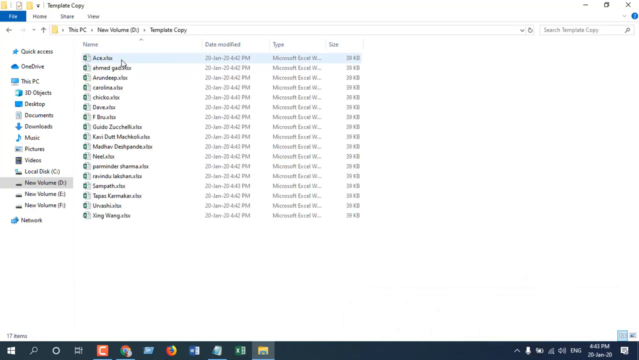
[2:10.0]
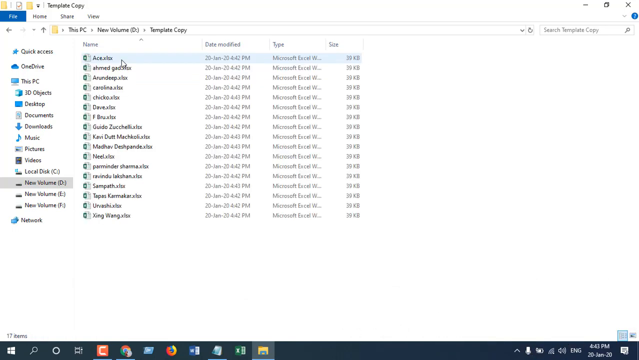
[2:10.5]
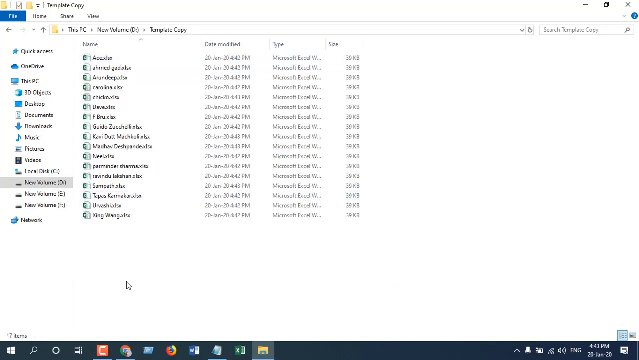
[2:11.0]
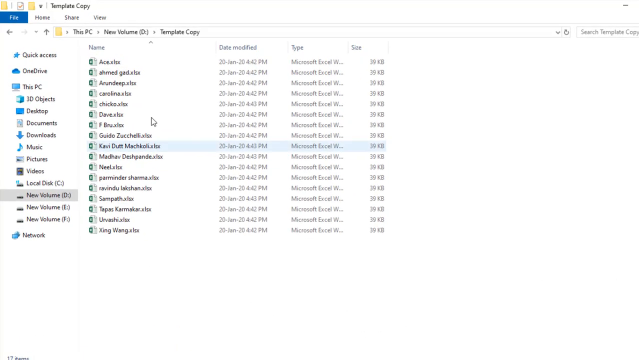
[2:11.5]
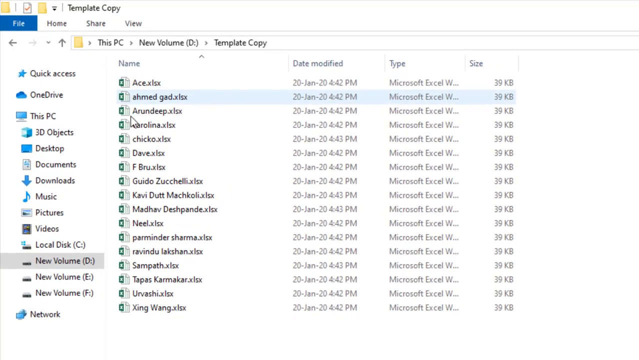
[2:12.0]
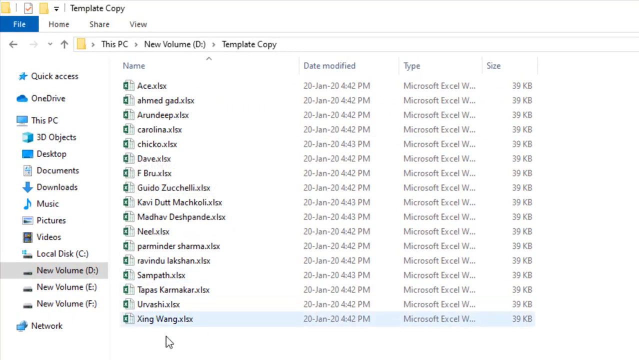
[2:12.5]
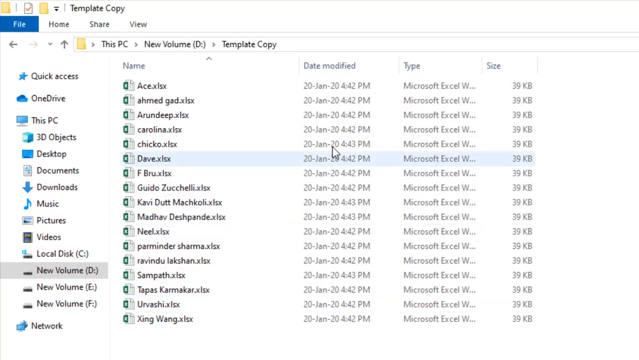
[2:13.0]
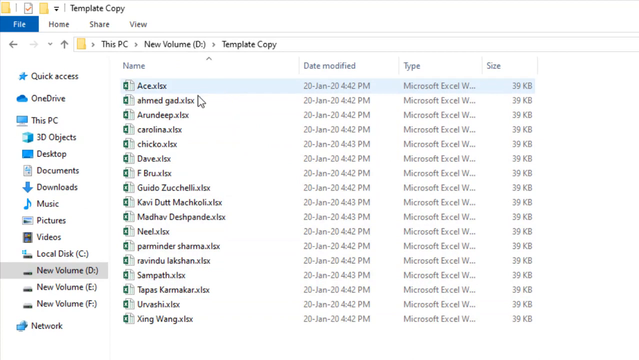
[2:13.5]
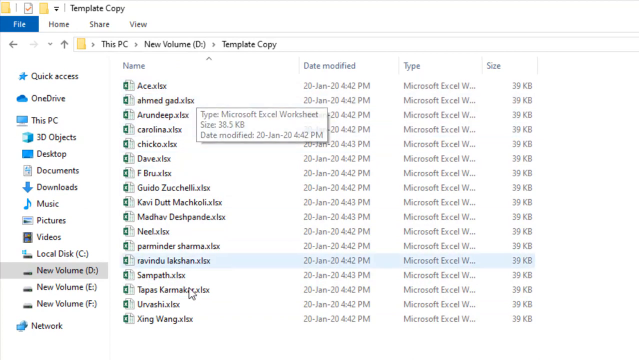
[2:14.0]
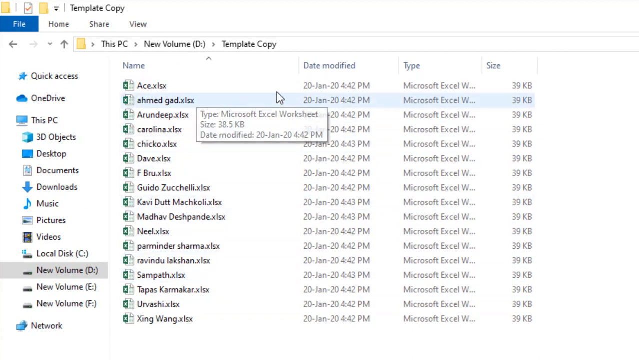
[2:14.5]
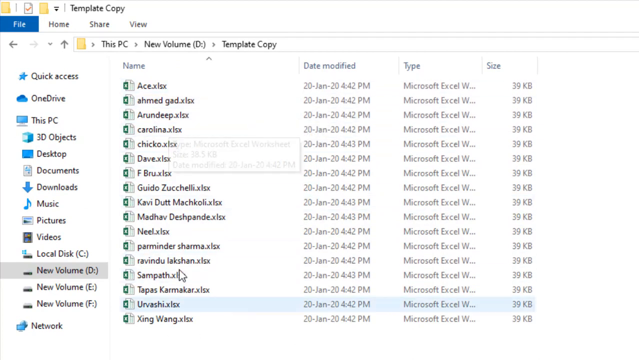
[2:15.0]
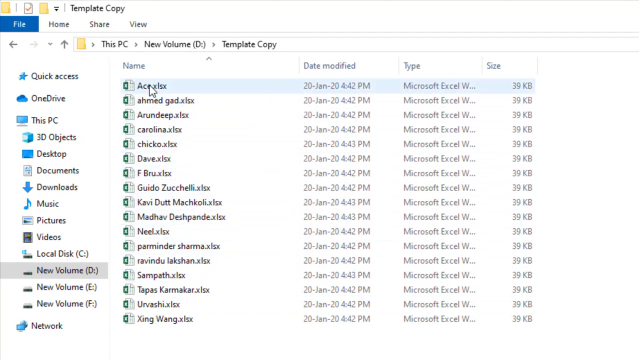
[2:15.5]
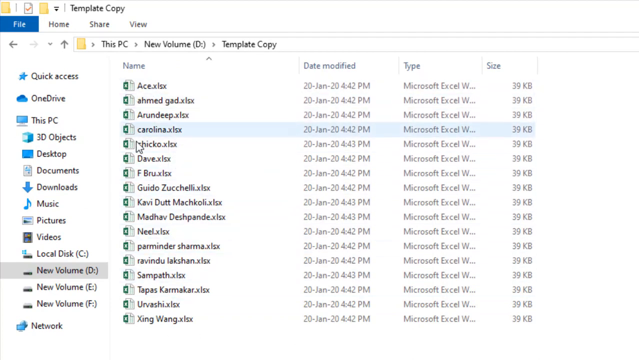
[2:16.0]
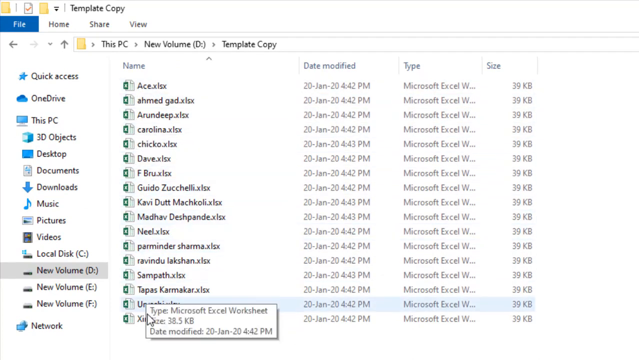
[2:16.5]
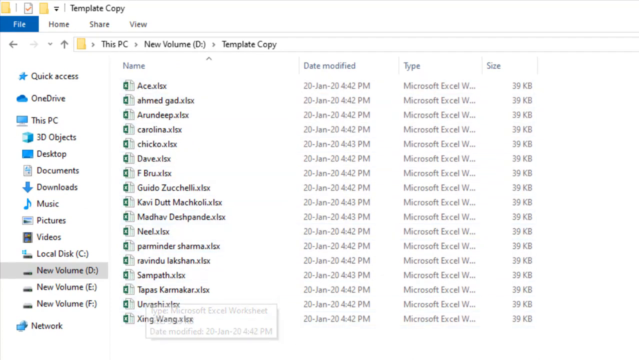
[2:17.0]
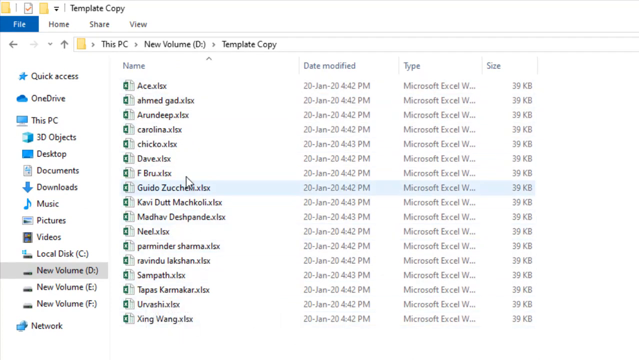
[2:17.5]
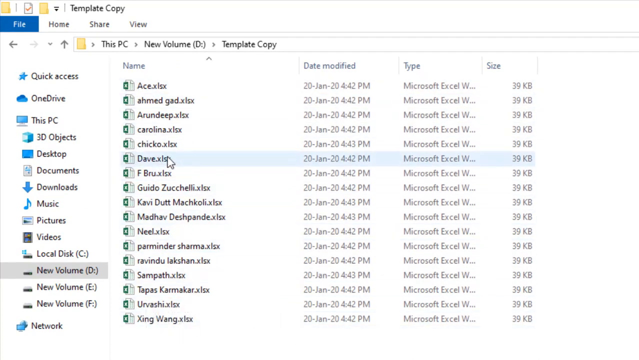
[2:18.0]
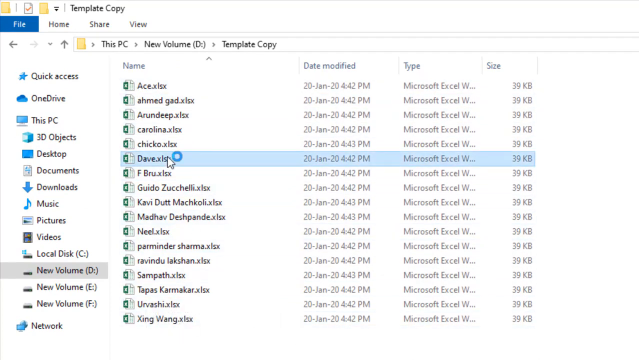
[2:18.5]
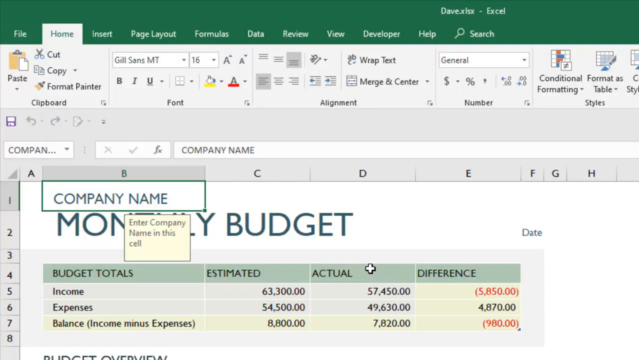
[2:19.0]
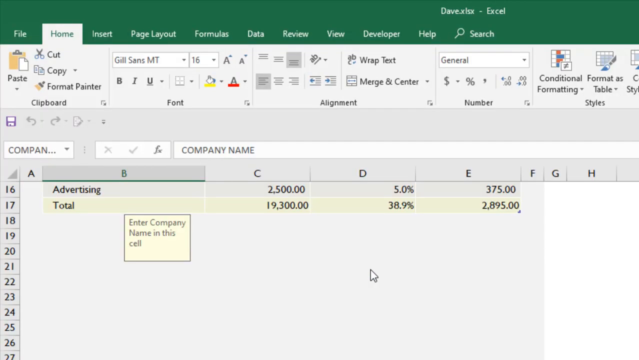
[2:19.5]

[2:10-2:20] The template copy folder is open, showing the many different Excel sheets it contains, and the view zooms in on them. All of them were modified on January 20, 2020, and all are 39 kilobytes in size. Down the list are Ace, Ahmed, Ardeep, Carolina, Chico, Dave, F. Brew, Guido Sujeli, Kavidut Machkali, Madhav Deshpande, Neil, Peramder Sharma, Ravindu Akshan, Sampath, Tapas Karmakar, Nirvashi, and Zing Wang. The mouse hovers over and circles all of them, then selects the Dave Excel sheet.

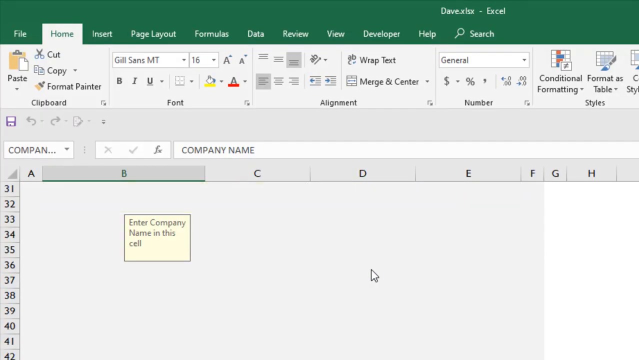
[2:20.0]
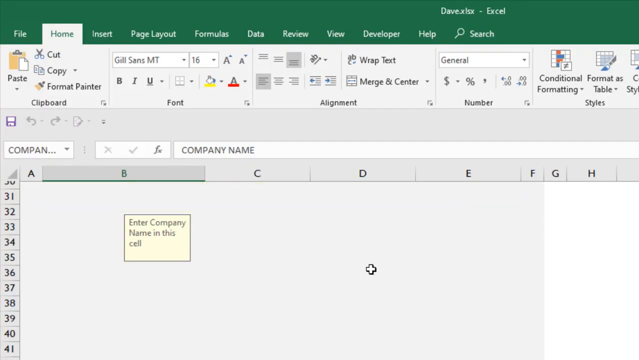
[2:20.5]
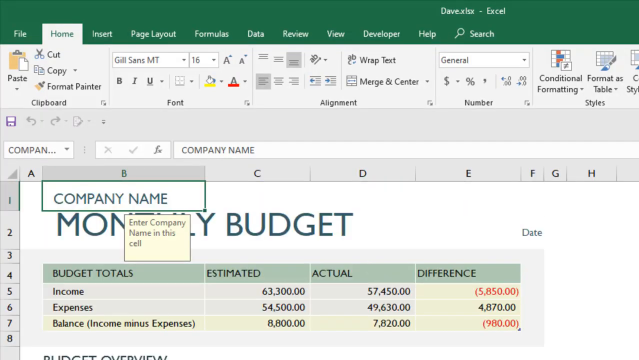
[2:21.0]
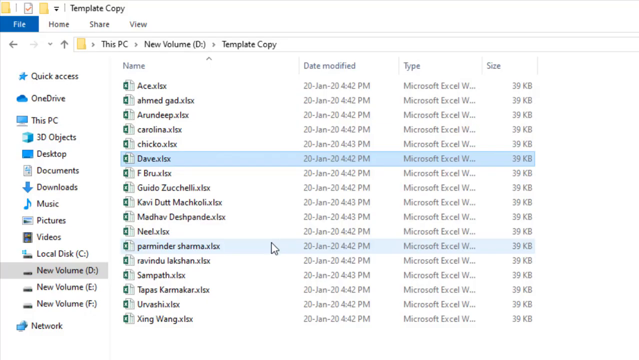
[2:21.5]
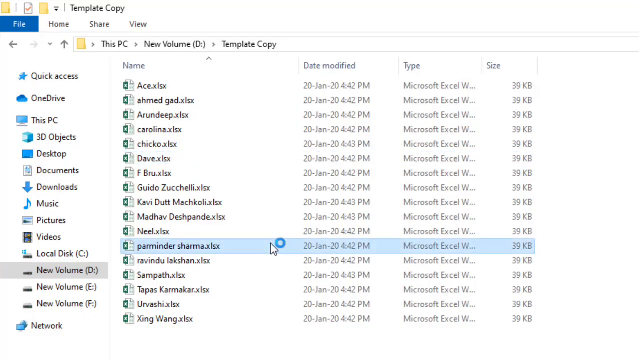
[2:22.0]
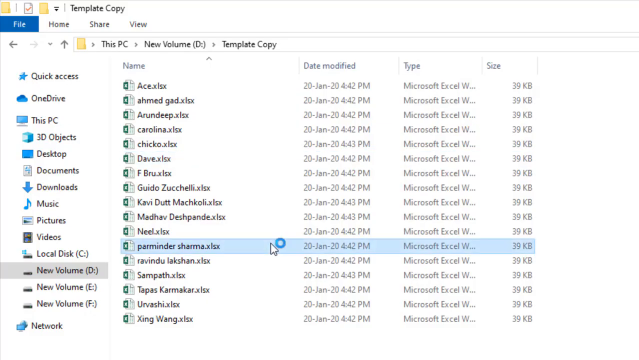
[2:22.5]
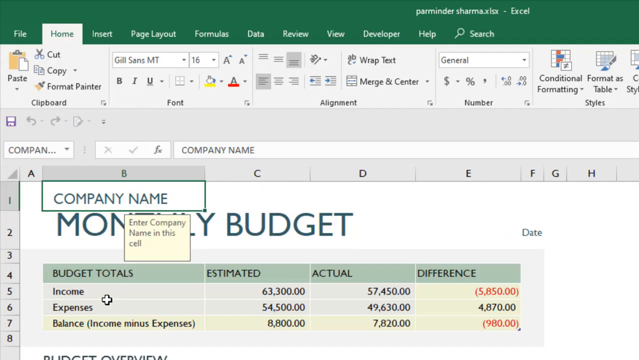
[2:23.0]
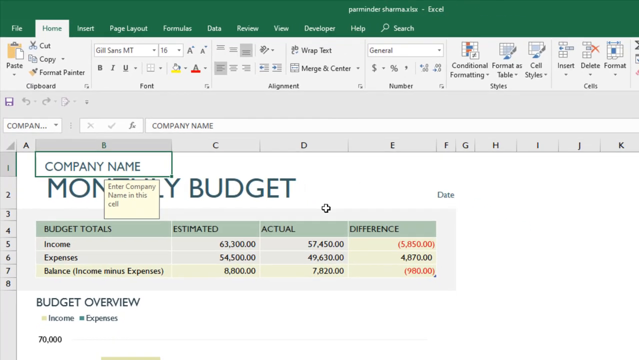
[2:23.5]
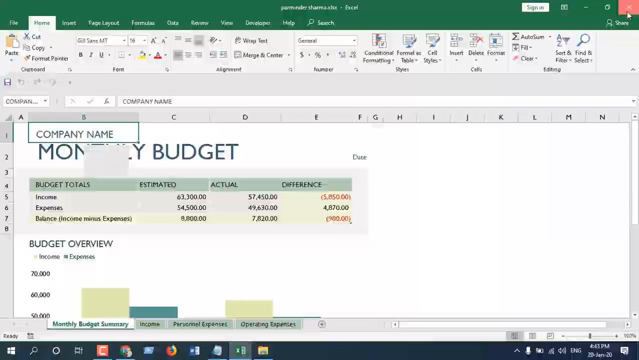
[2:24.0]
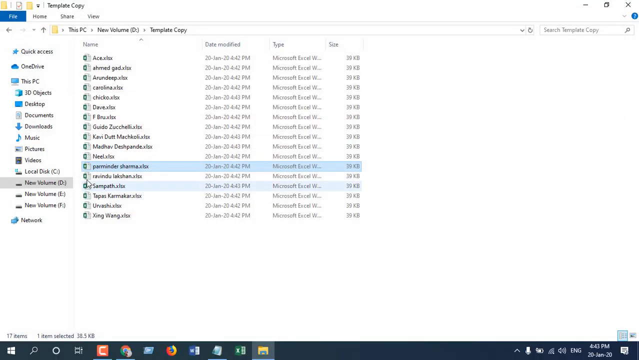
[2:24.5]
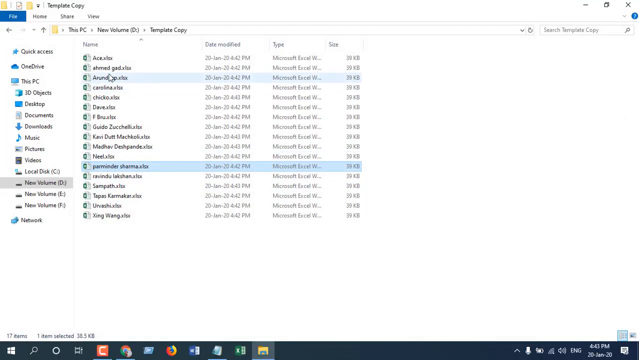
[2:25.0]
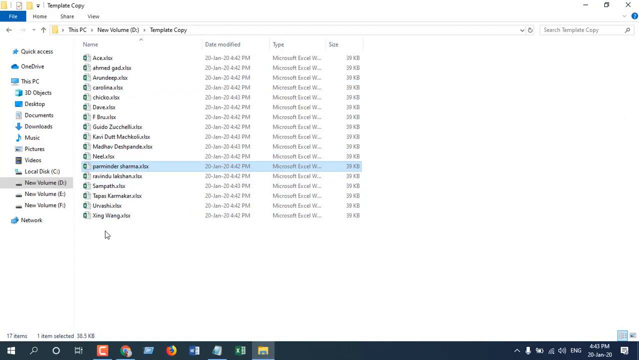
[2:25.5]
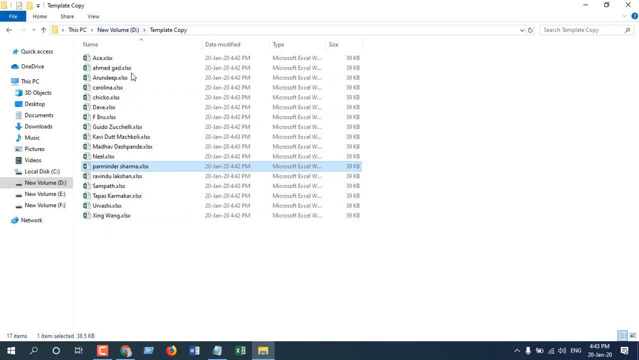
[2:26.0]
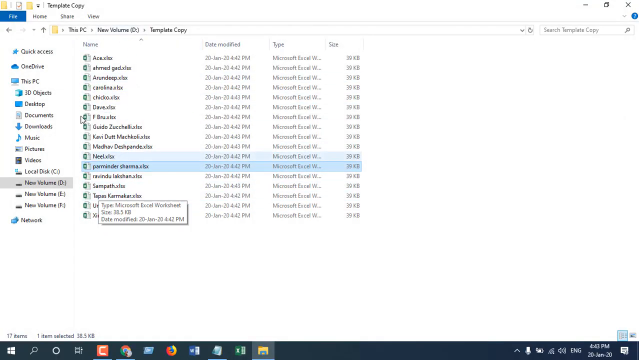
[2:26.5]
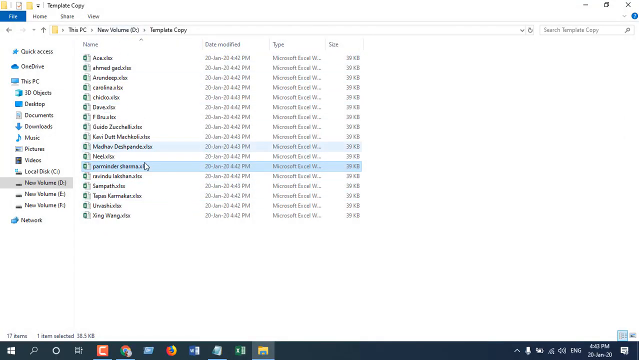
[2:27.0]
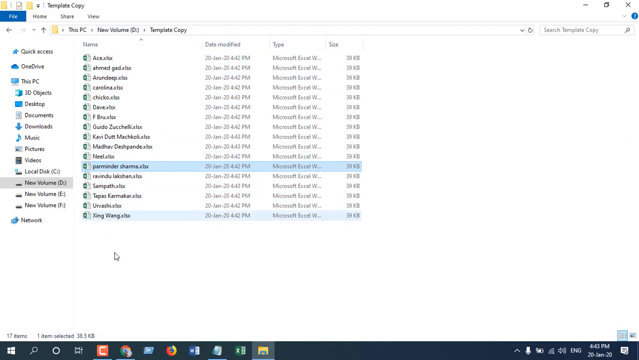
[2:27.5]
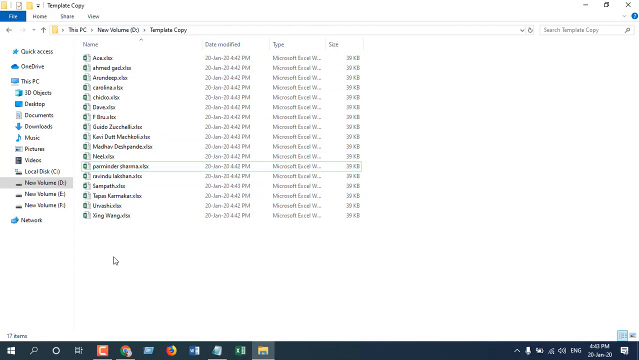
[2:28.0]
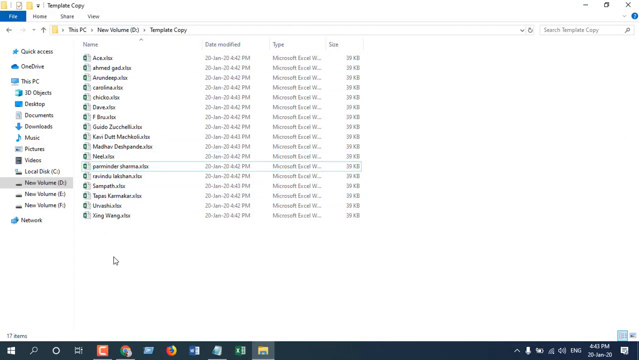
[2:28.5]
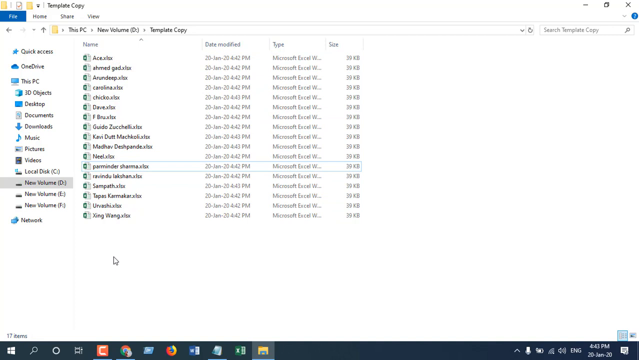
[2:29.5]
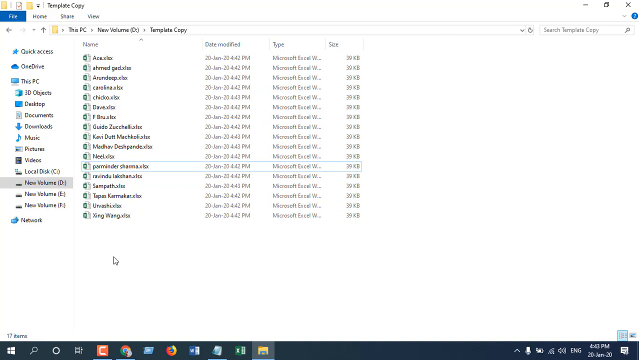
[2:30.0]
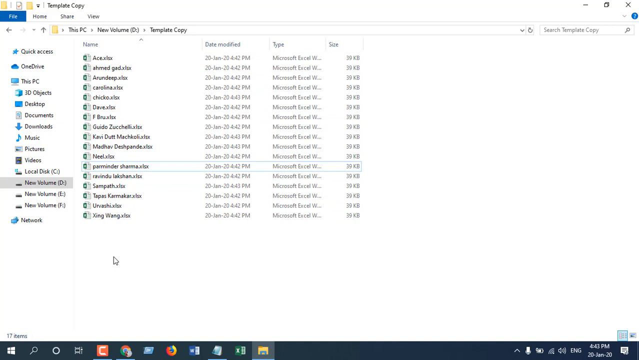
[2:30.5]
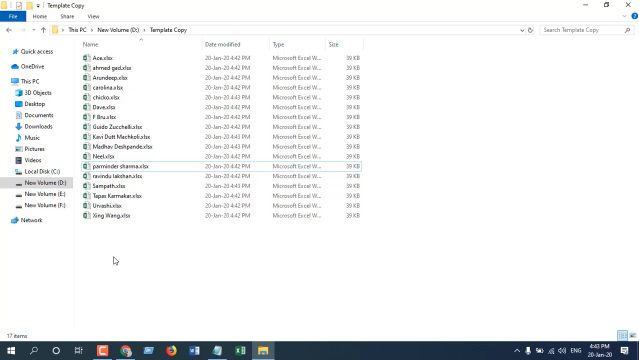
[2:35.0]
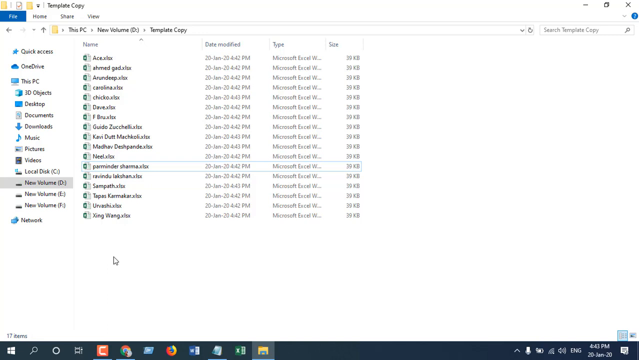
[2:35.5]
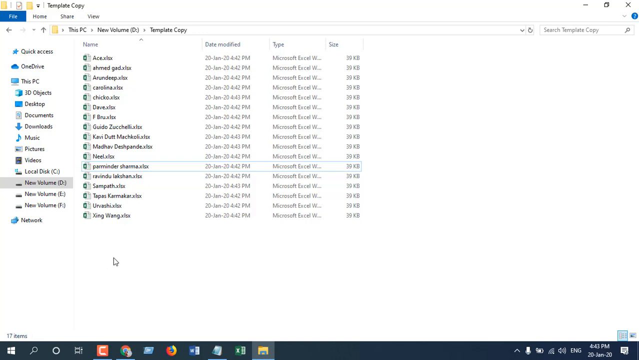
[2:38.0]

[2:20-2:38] The Excel sheet opens, with a green sticky note in a cell saying "enter company". Column B shows company name, and money budget, all in green. The sheet is closed and Perimeter Sharama is opened, then closed, and the files are highlighted up and down. The money budget table has columns for budget totals, estimated, actual, and difference, and rows for income, expenses, and balance (income minus expenses). Income is $63,300 estimated and $57,450 actual, a difference of $5,850. Expenses are $4,500 estimated and $49,630 actual, a difference of $4,807.